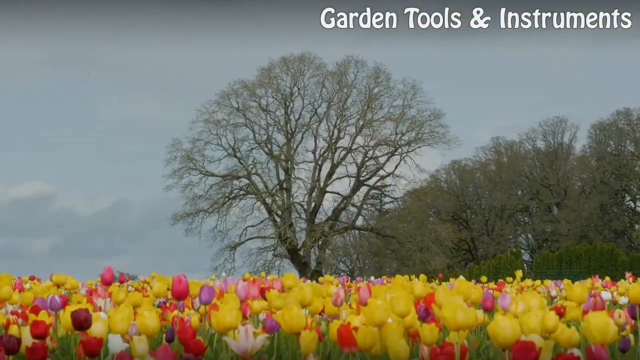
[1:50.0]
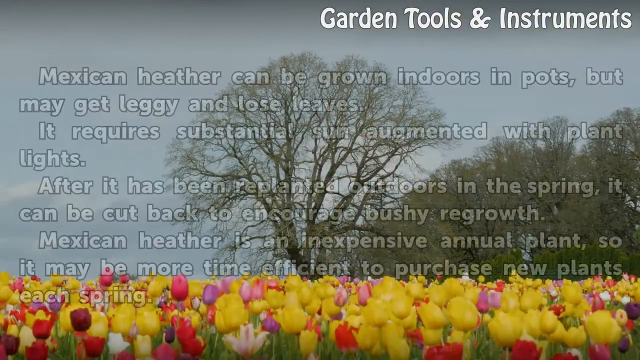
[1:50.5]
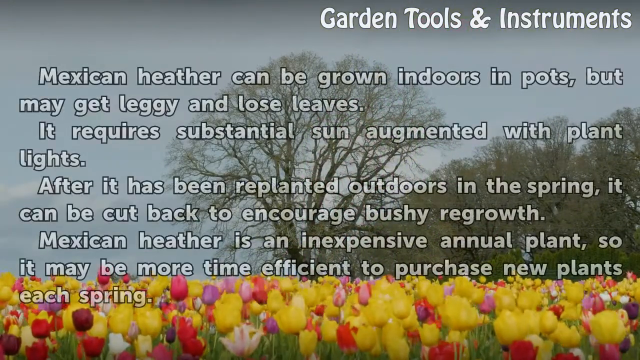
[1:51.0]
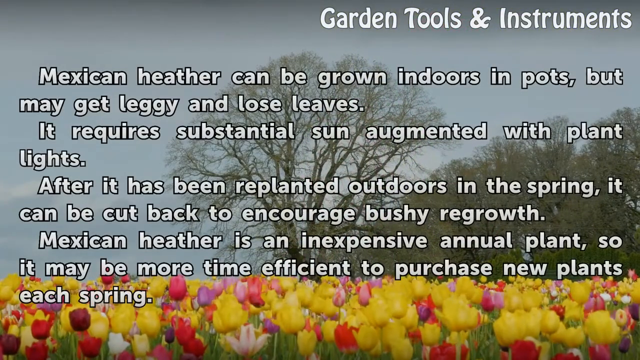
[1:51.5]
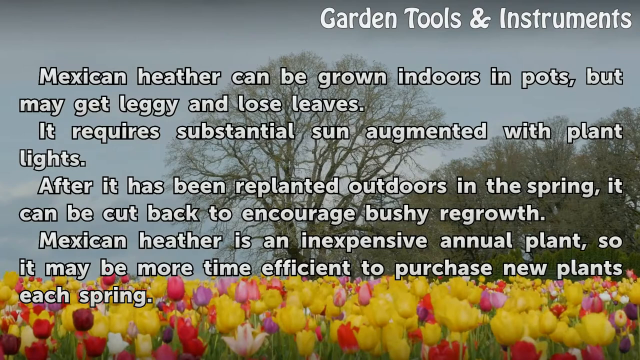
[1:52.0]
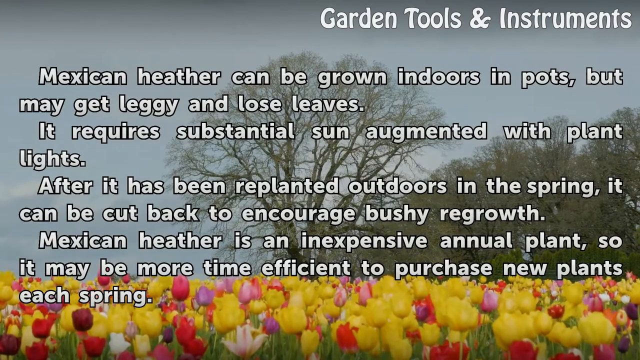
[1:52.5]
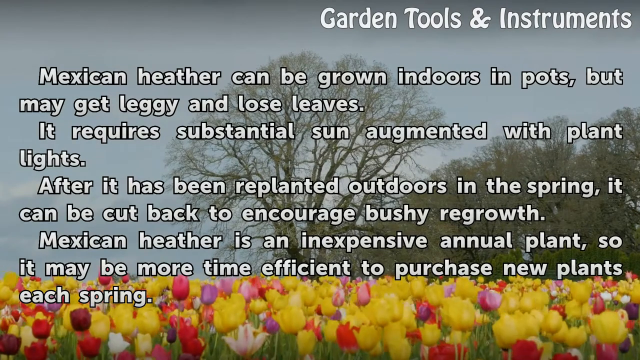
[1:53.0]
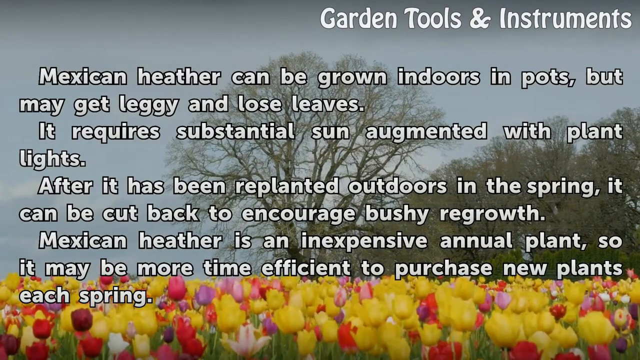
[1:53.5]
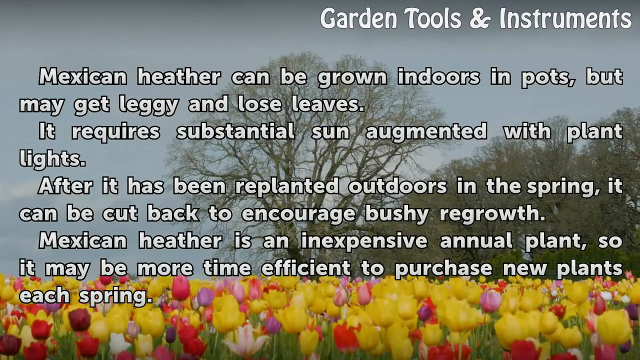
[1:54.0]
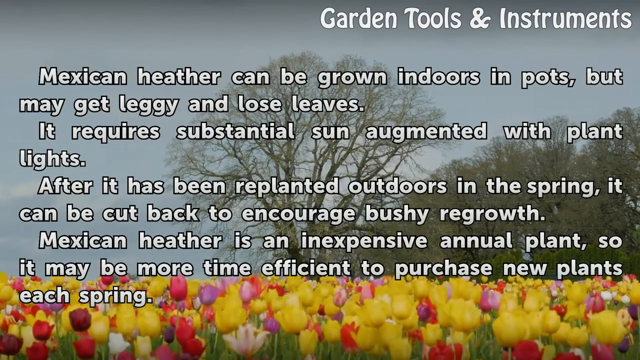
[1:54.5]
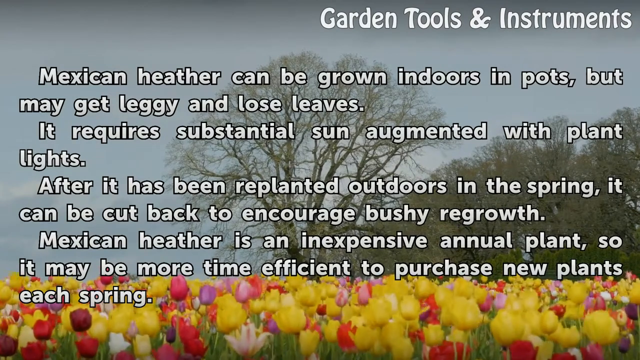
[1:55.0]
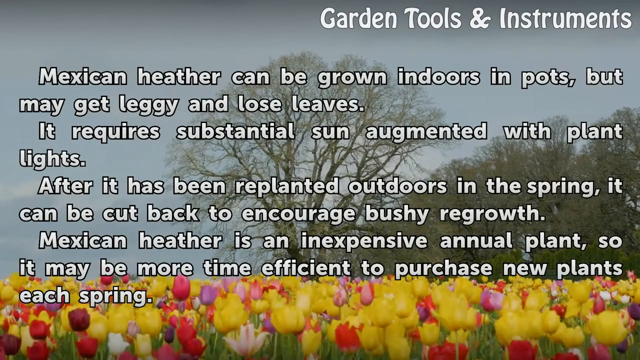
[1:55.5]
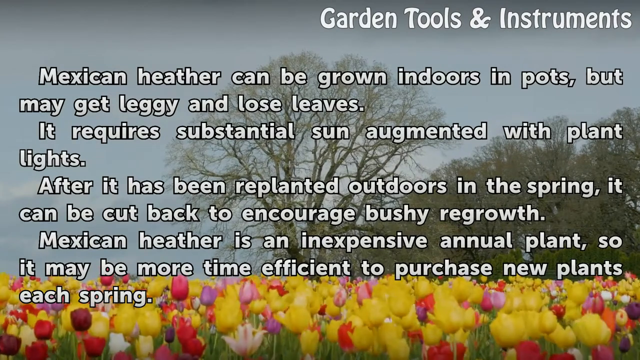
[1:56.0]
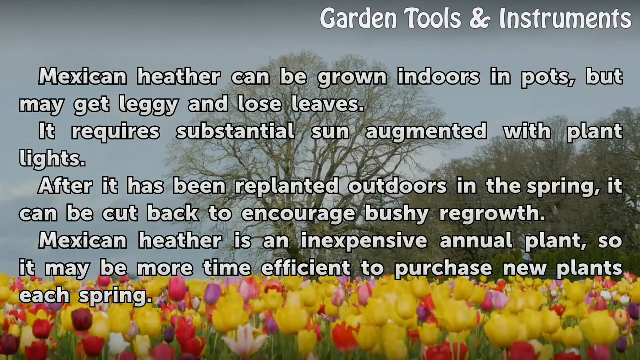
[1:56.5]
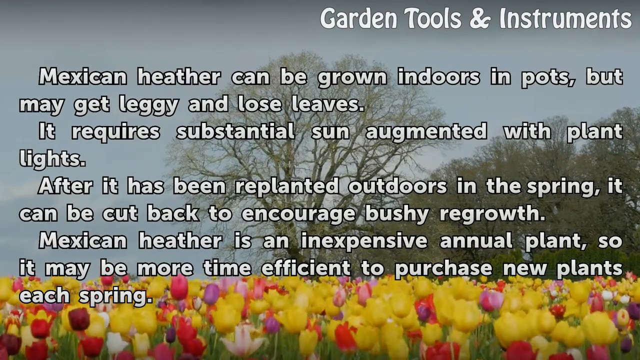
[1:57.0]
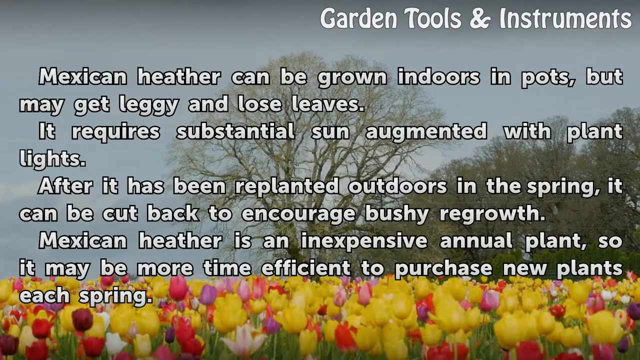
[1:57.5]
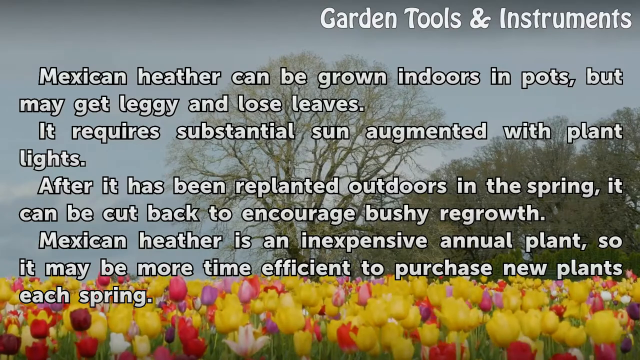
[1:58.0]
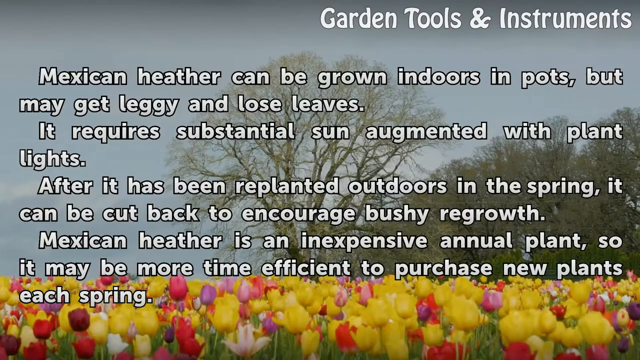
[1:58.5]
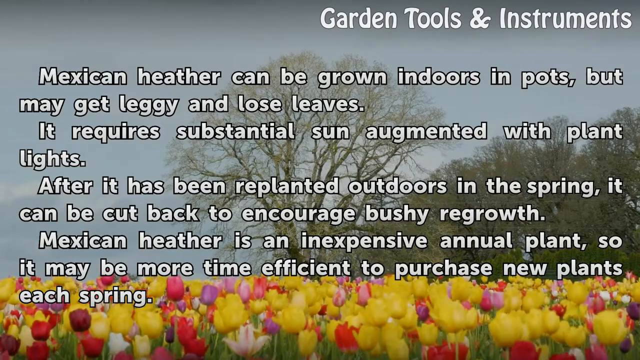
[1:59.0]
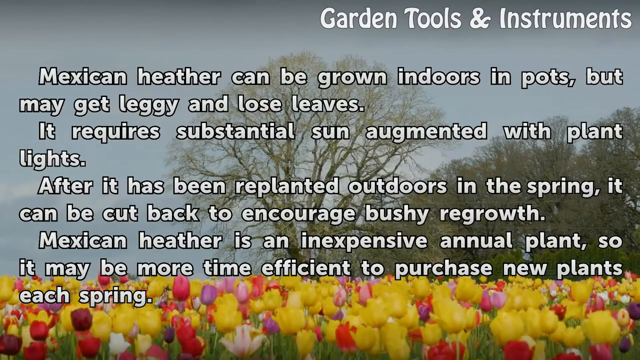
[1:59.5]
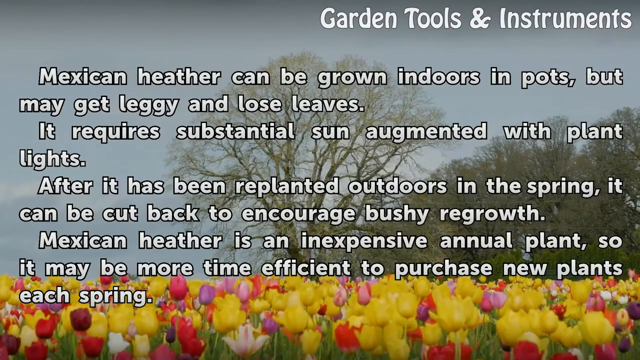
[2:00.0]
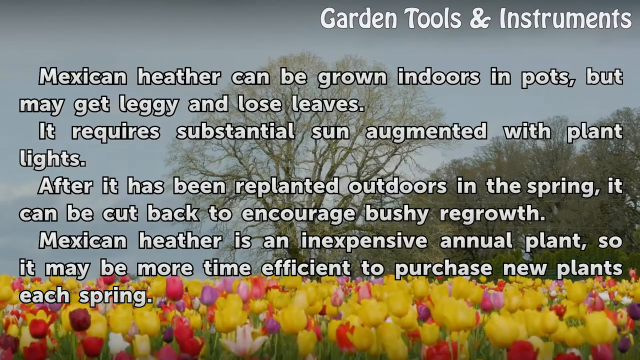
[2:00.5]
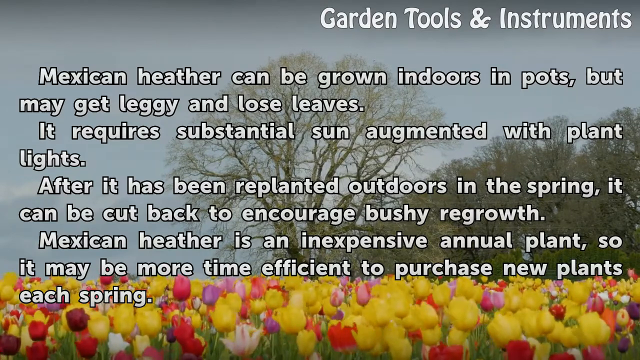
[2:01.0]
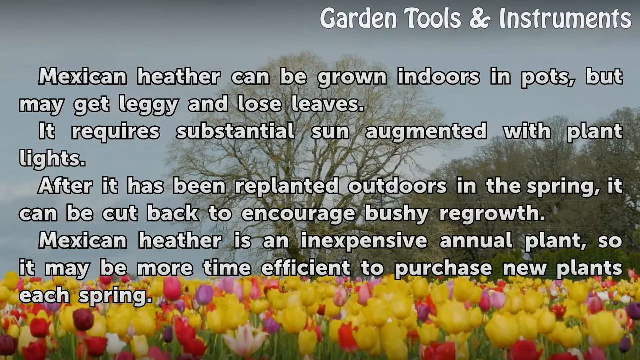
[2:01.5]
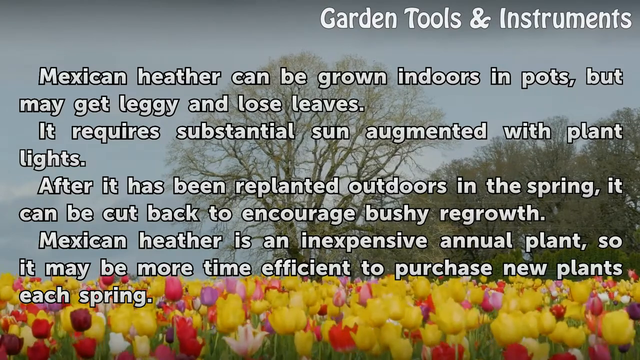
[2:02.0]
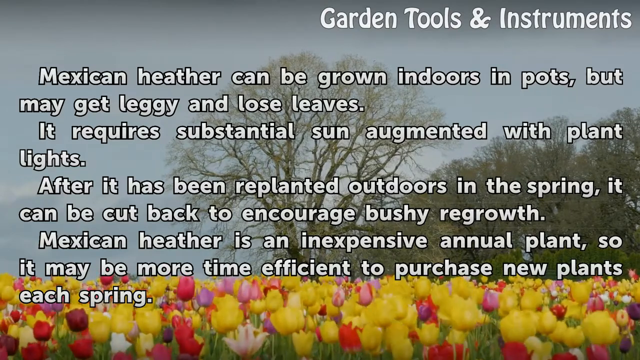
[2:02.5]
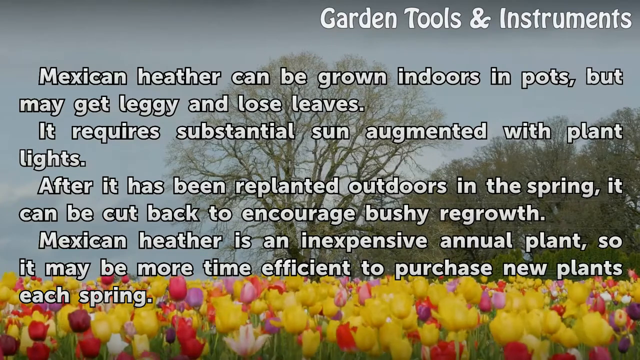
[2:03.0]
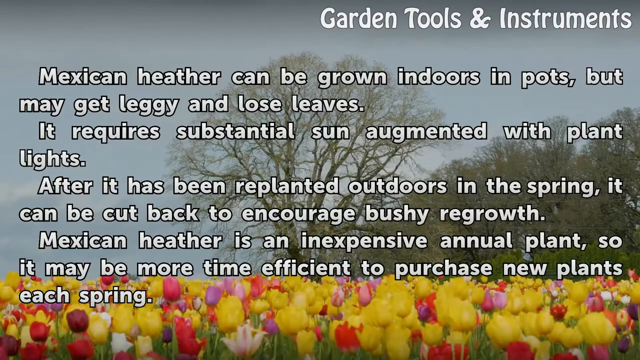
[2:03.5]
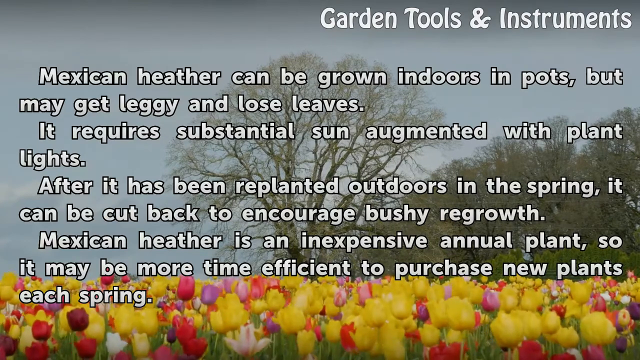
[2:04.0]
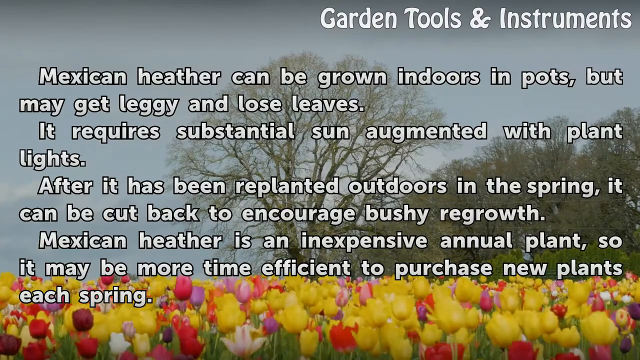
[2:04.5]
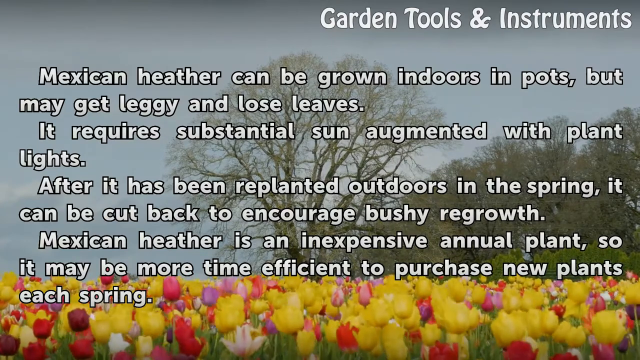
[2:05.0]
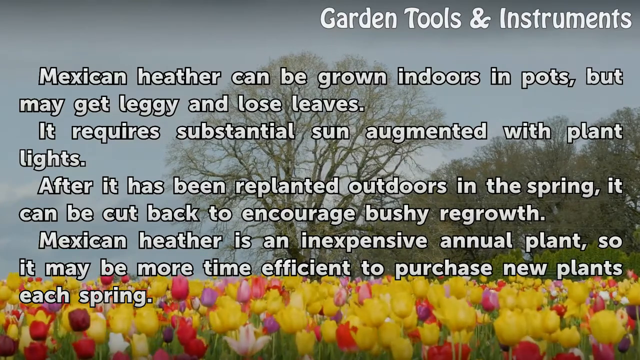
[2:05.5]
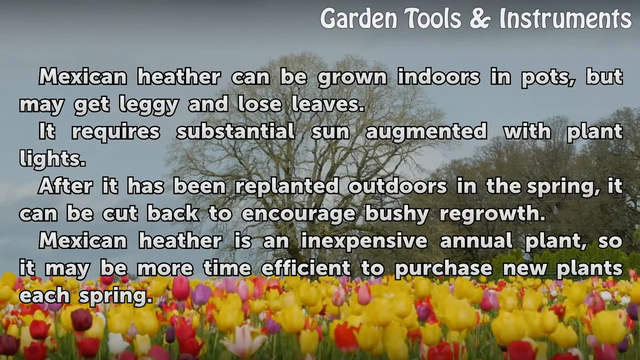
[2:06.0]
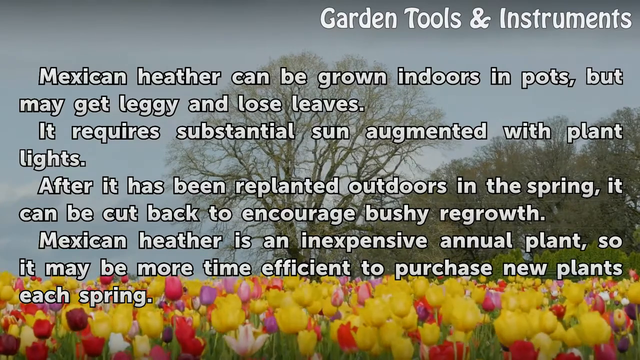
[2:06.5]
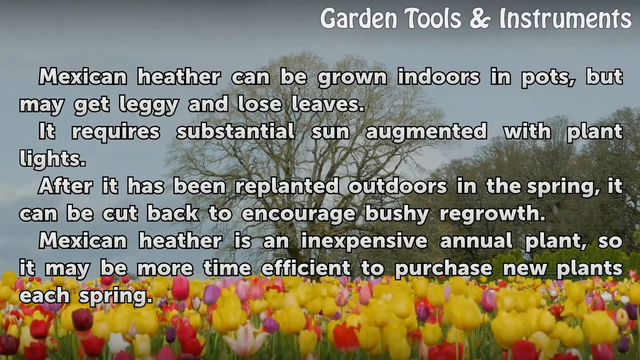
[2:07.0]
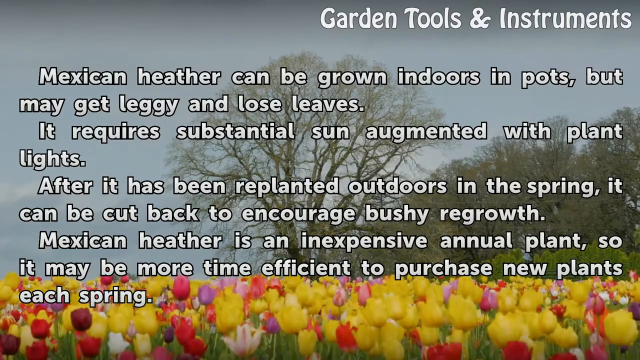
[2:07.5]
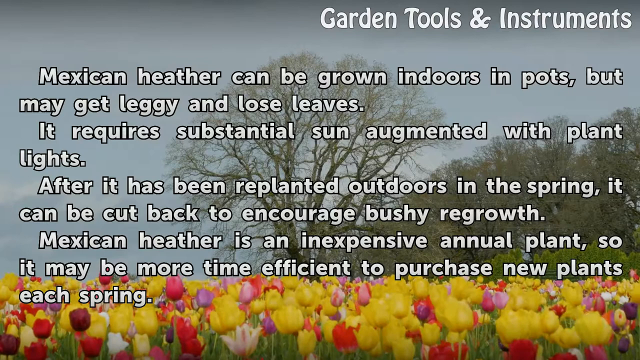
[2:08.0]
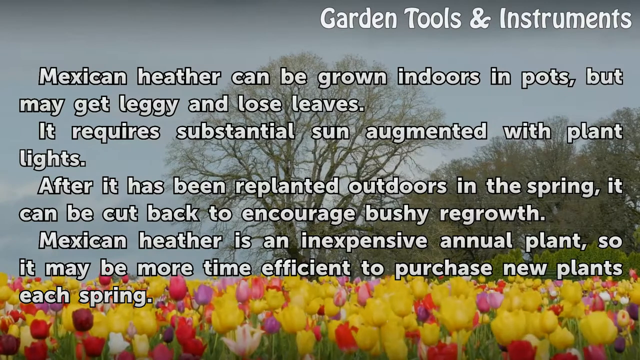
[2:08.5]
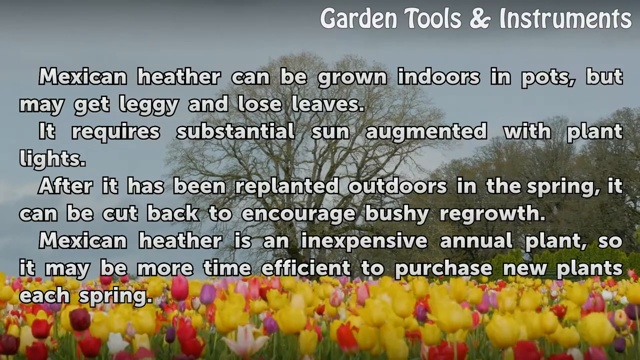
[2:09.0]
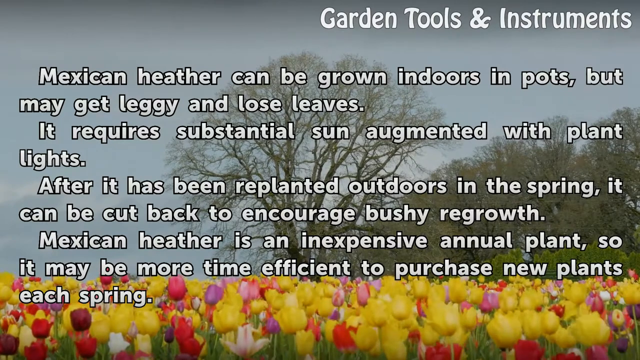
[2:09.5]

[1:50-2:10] Lots of very colorful yellow, pink and purple flowers grow on the ground outside, slowly swaying in the wind, and beyond them are tall bare trees with no leaves visible. Text slowly appears over the screen in a white font with a very fine black border: "Mexican heather can be grown indoors in pots but may get leggy and loose leaves. It requires substantial sun augmented with plant lights. After it has been replanted outdoors in the spring it can be cut back to encourage bushy regrowth. Mexican heather is an inexpensive annual plant so it may be more time efficient to purchase new plants each spring." The text stays on screen as the flowers continue to sway slightly in the background.